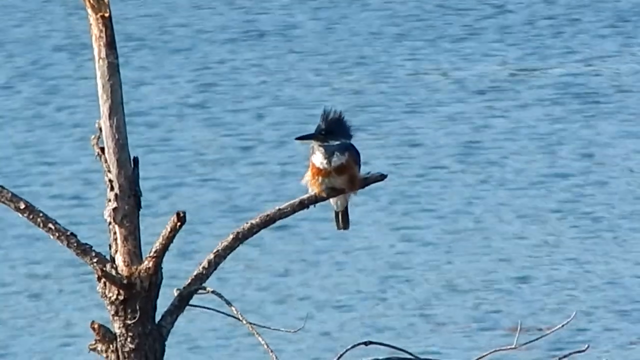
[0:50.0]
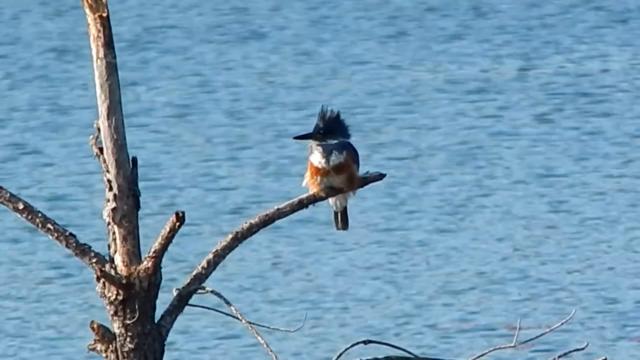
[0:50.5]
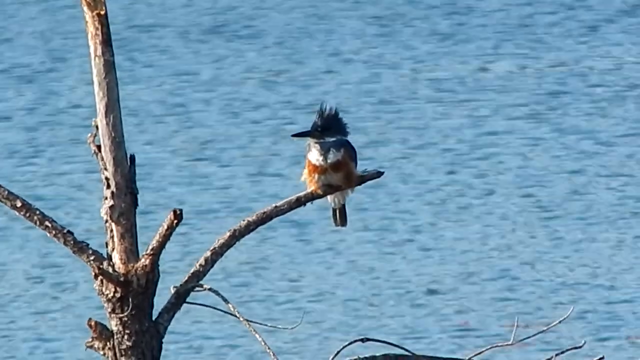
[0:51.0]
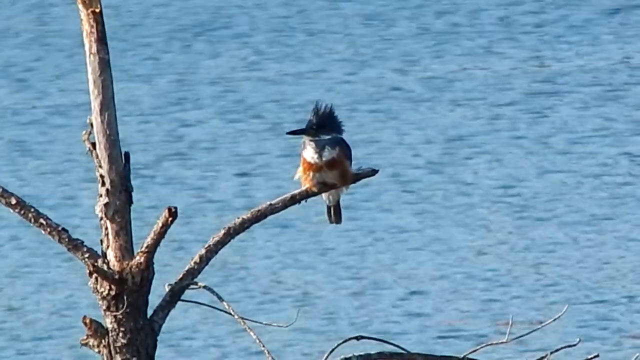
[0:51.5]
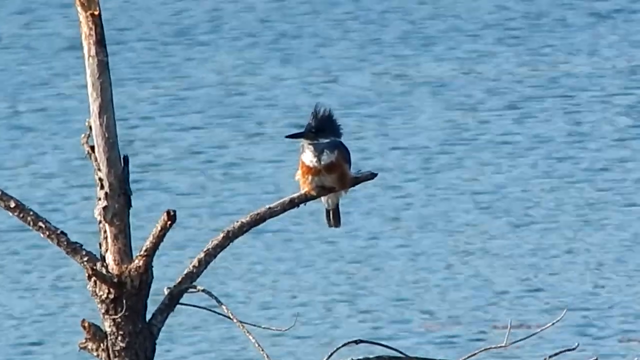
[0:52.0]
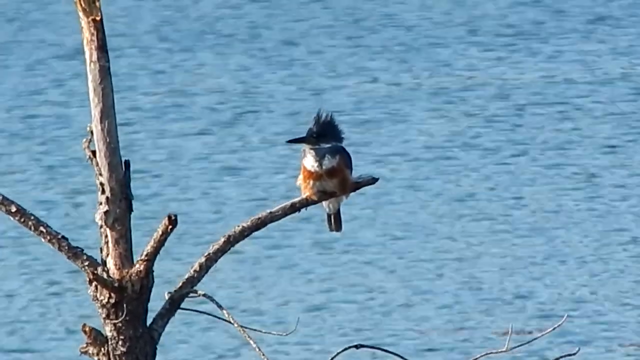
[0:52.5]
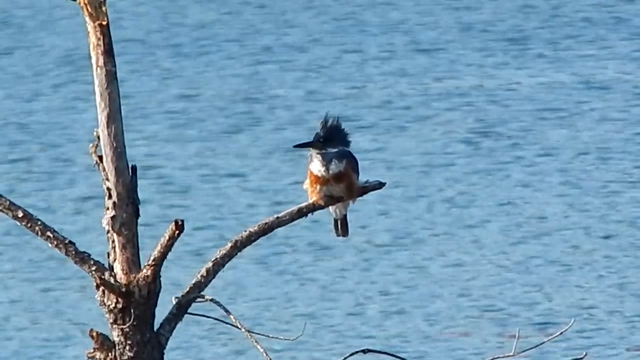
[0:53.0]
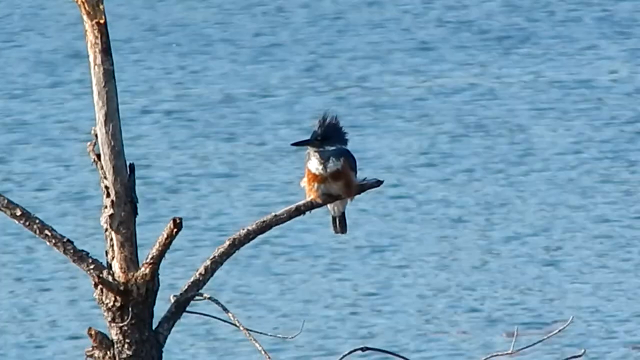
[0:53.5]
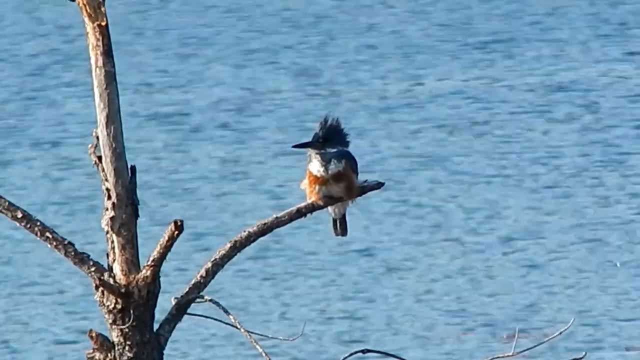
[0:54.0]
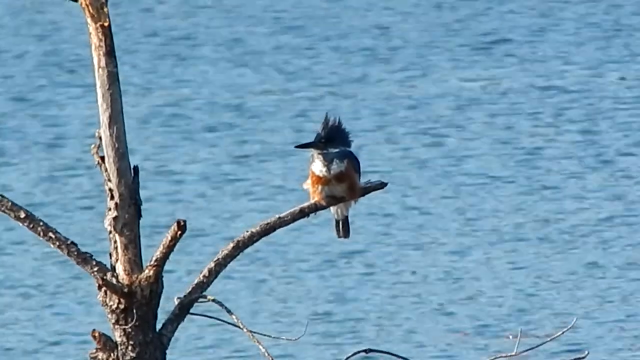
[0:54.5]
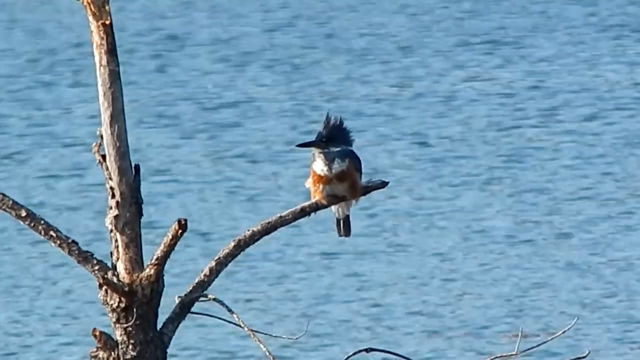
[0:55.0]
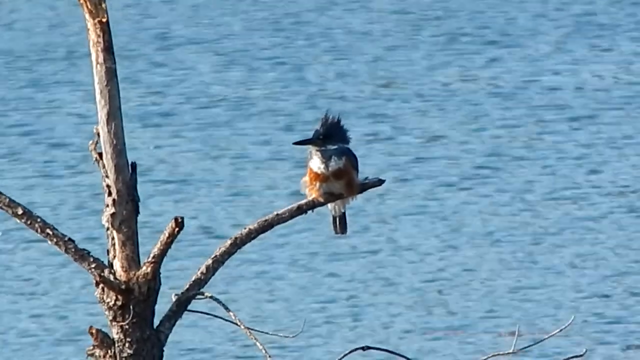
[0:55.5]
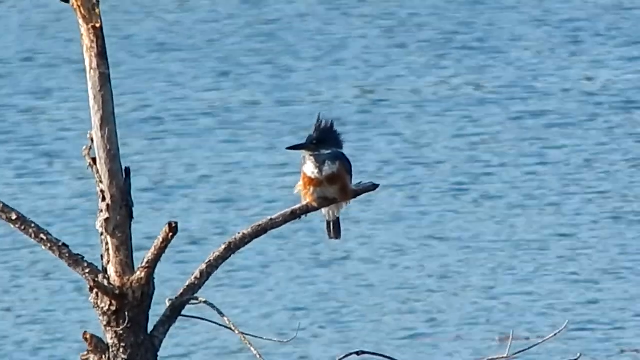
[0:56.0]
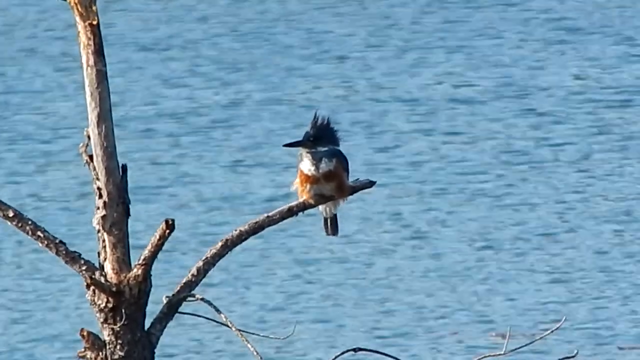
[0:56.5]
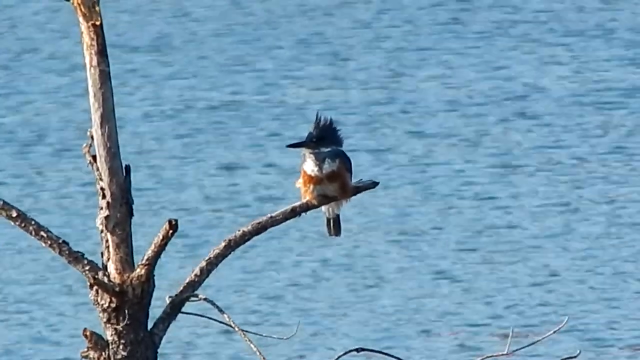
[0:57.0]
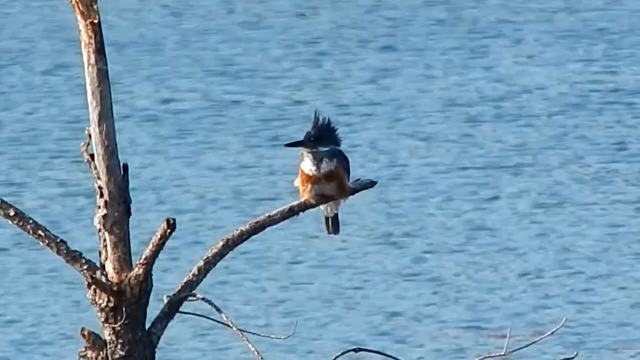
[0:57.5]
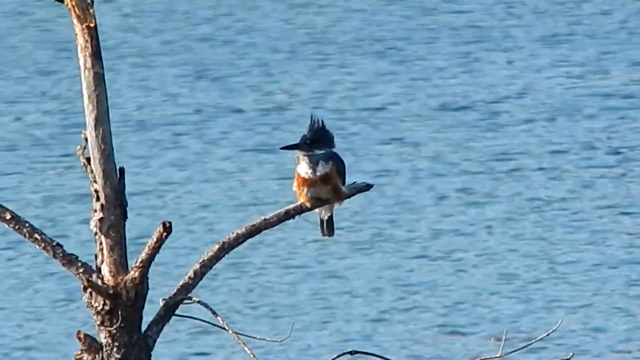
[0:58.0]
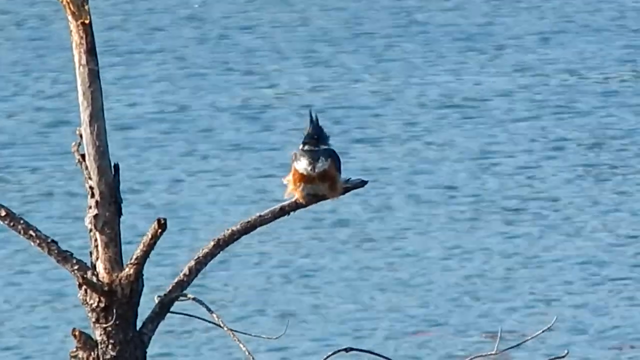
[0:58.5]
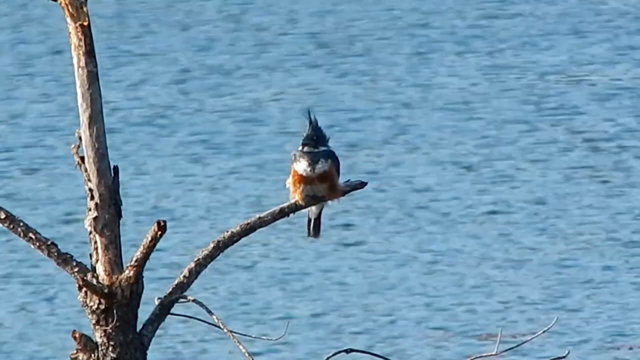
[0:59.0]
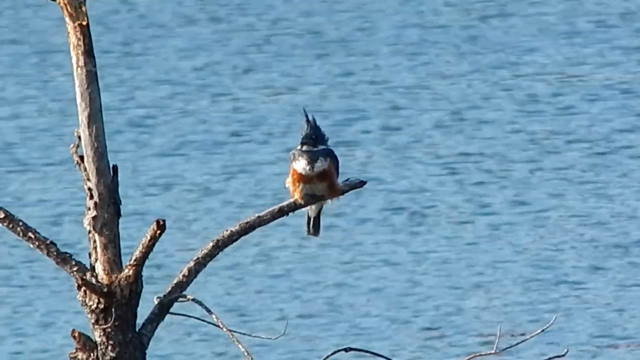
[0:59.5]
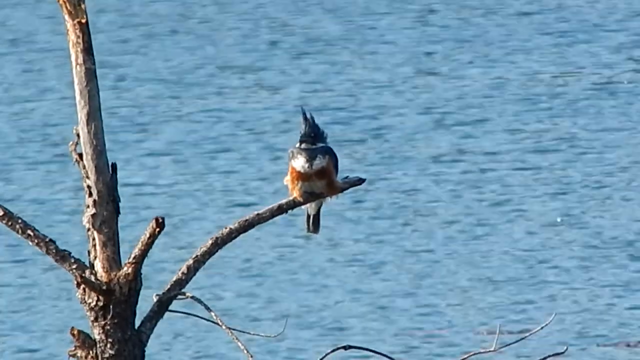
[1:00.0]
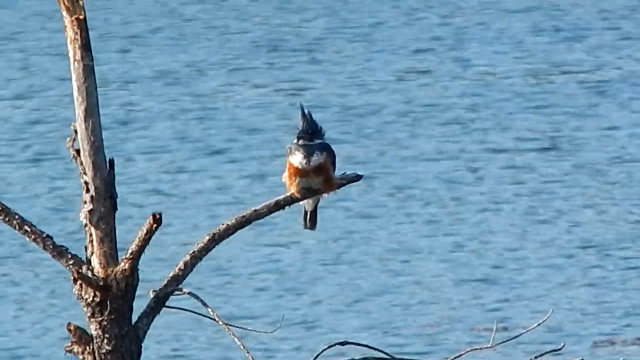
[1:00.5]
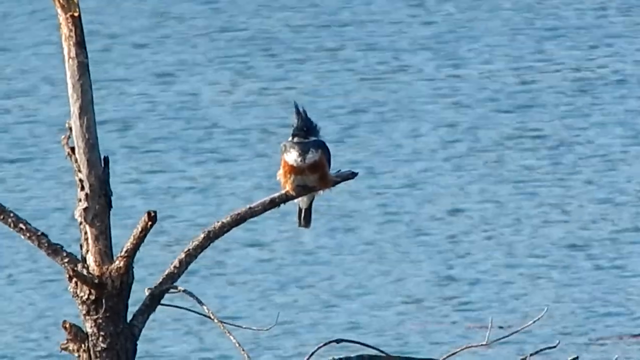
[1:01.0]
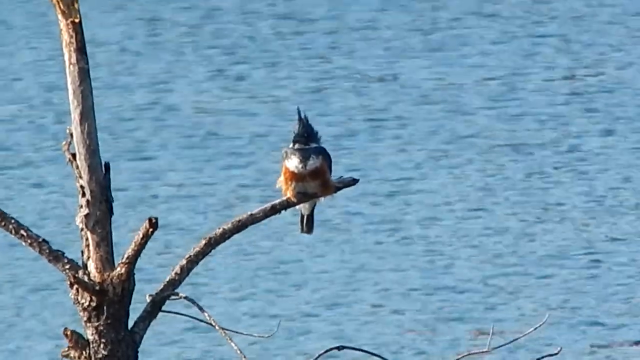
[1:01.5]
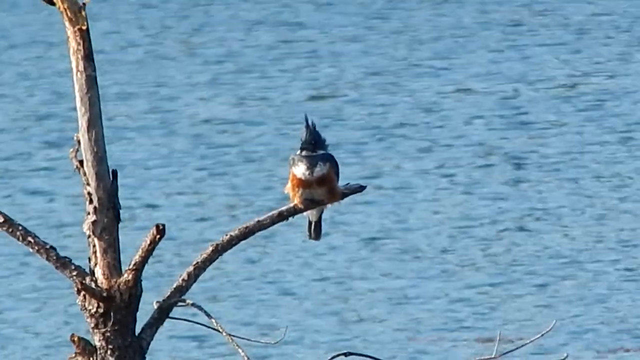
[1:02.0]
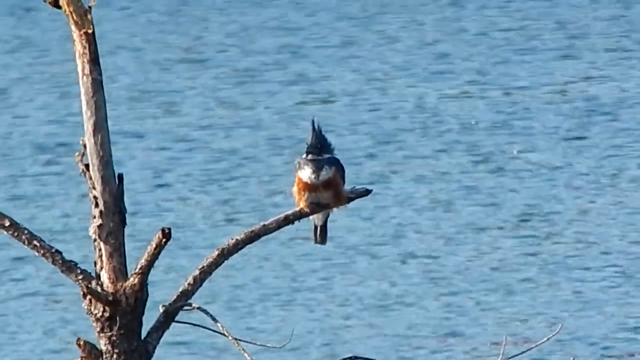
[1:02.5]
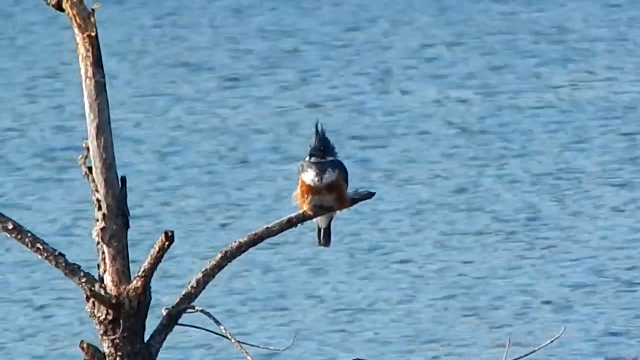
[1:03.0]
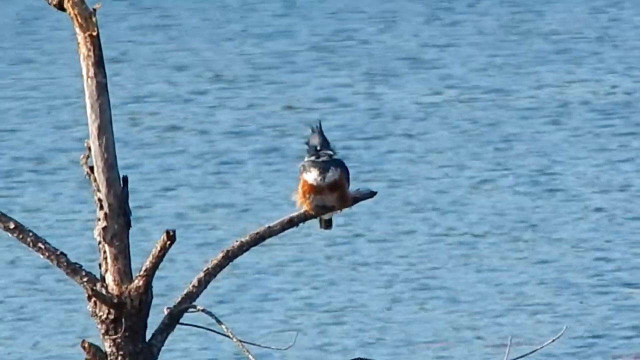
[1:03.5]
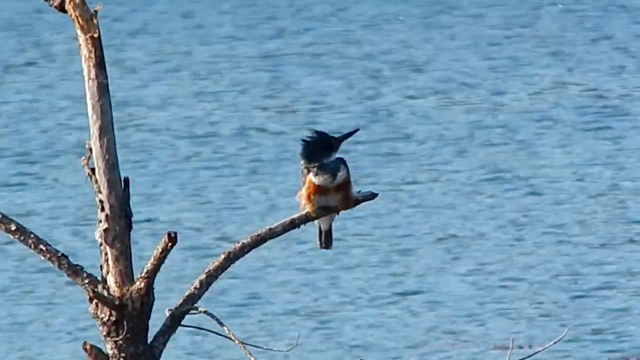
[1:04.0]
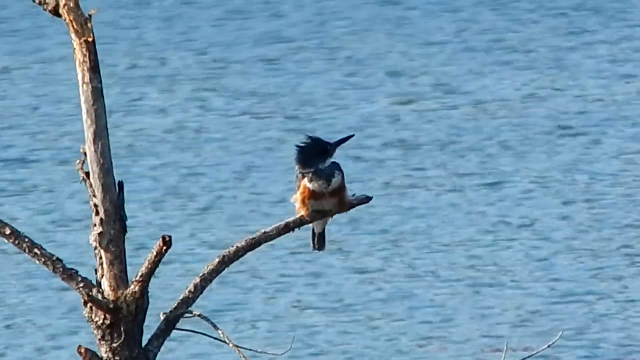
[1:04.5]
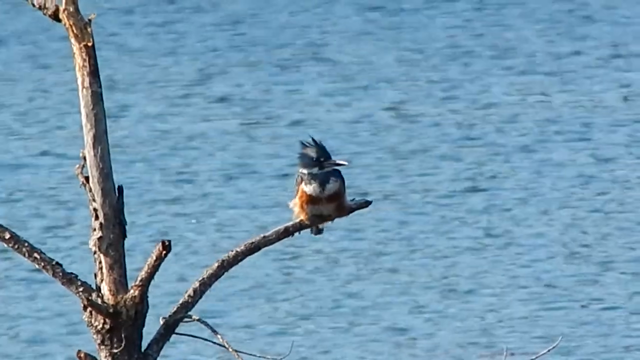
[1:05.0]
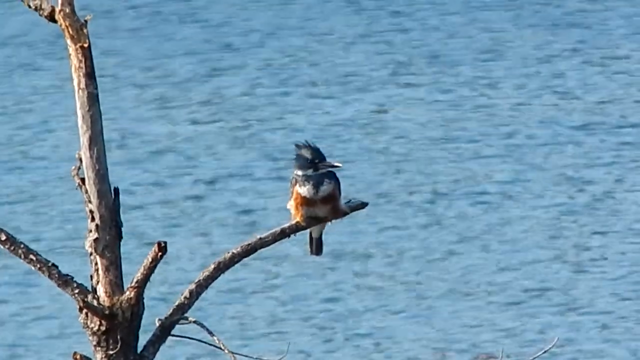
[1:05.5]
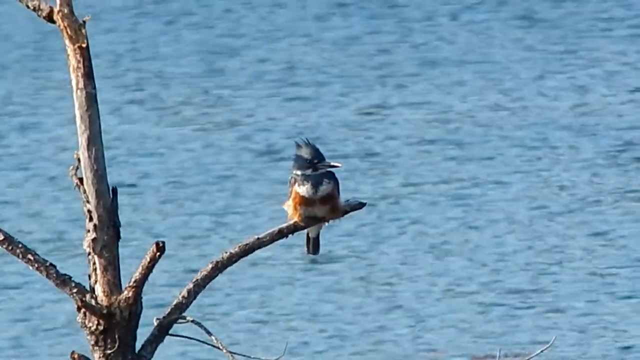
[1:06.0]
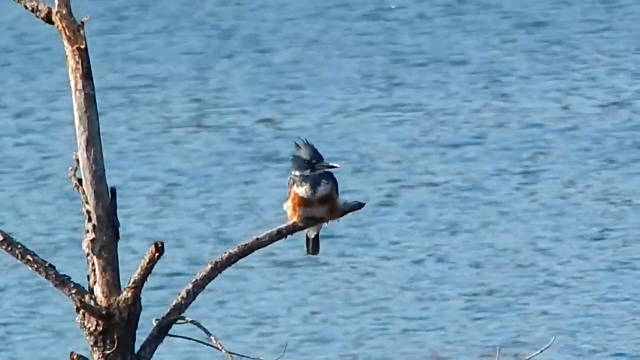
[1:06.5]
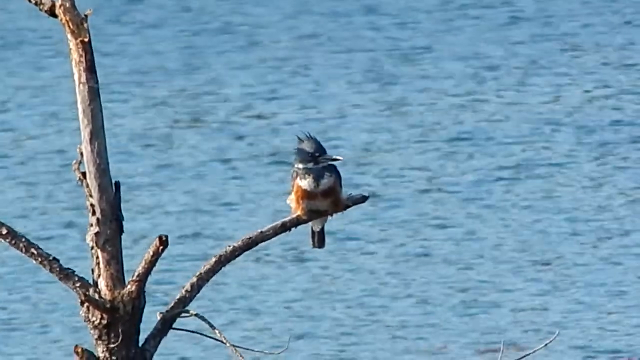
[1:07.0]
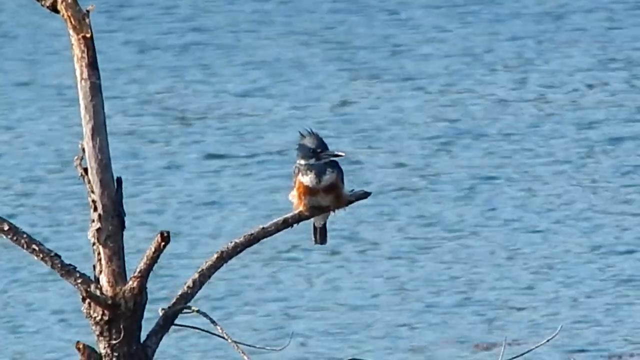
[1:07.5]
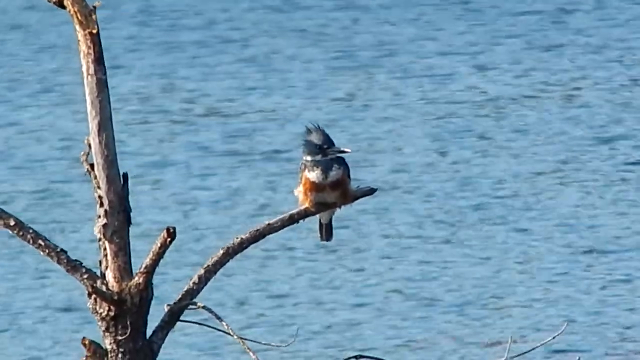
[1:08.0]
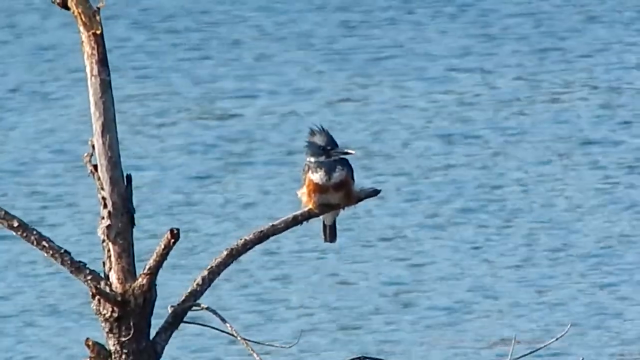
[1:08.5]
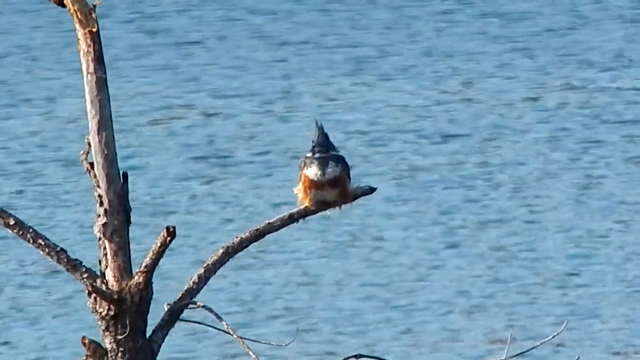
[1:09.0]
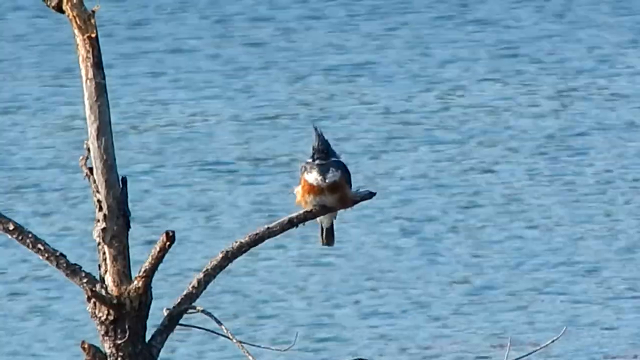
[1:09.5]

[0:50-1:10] A woodpecker is on a branch of a dead tree on the left-most side of the screen. Most of the bark has worn away from the tree except on two of the dead branches, and another smaller branch has no bark on it. The woodpecker is perched on the right branch in the center of the frame. It has long, dark tail feathers, a dark crest of feathers, a pointy beak, and a reddish-brown breast. Behind it, the lake is very placid, with small ripples from the wind. The bird looks around, looks up at the sky, looks around again, looks back up at the sky, and then looks to the right. The view then changes to a different angle of the lake with no birds, where there is dry grass in the lake.